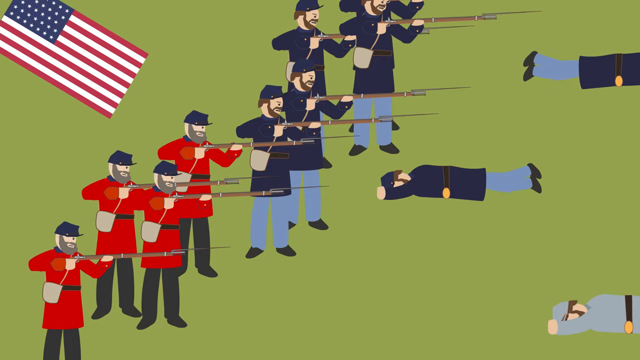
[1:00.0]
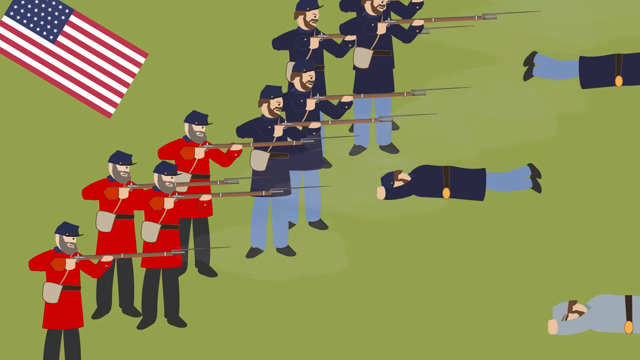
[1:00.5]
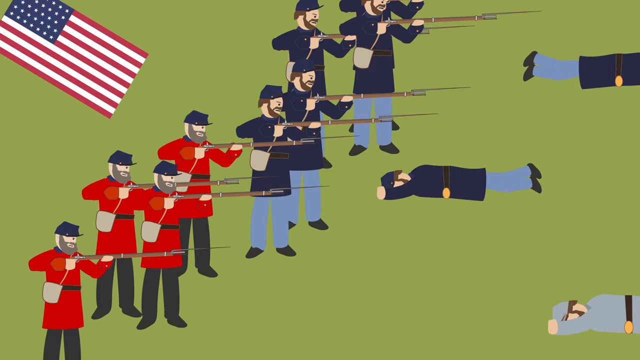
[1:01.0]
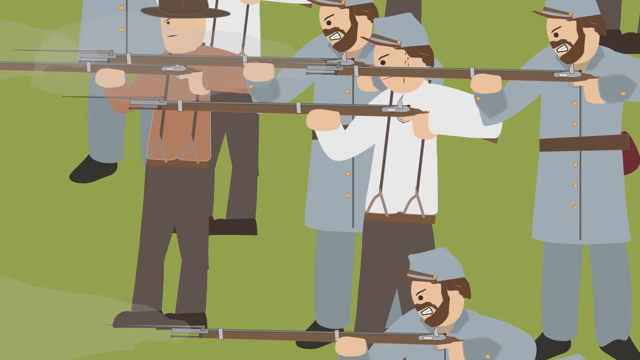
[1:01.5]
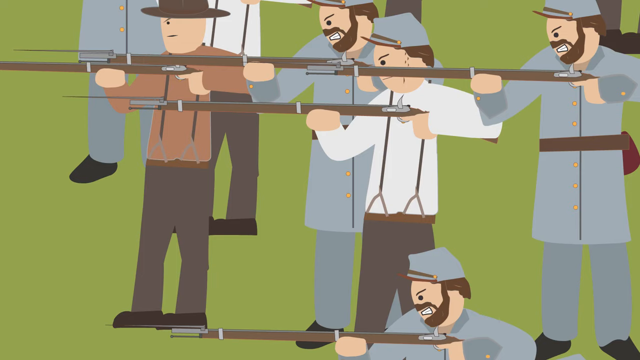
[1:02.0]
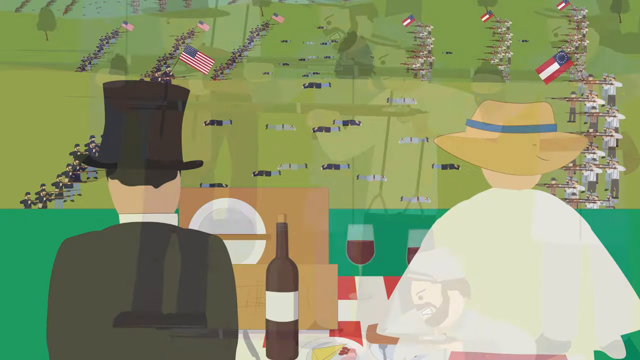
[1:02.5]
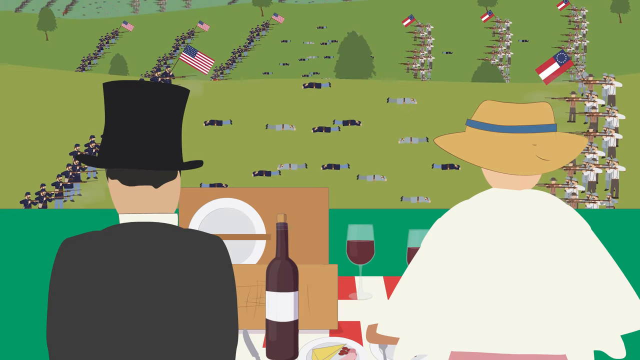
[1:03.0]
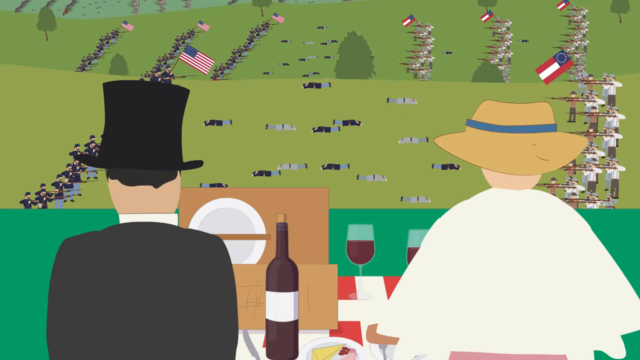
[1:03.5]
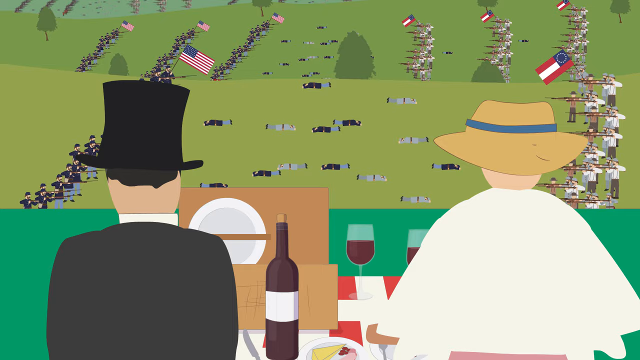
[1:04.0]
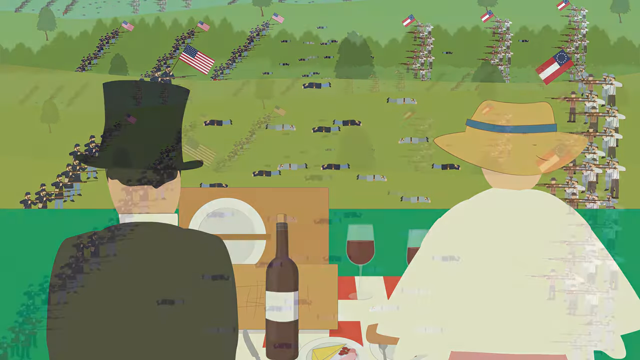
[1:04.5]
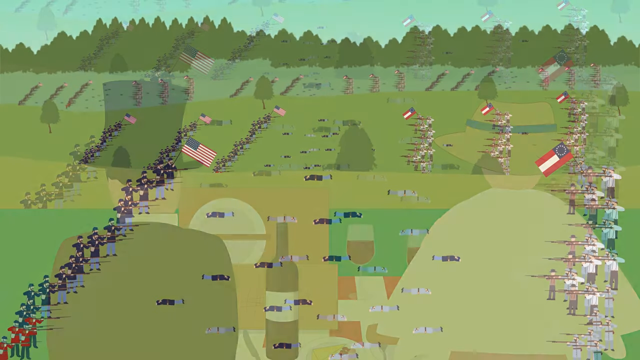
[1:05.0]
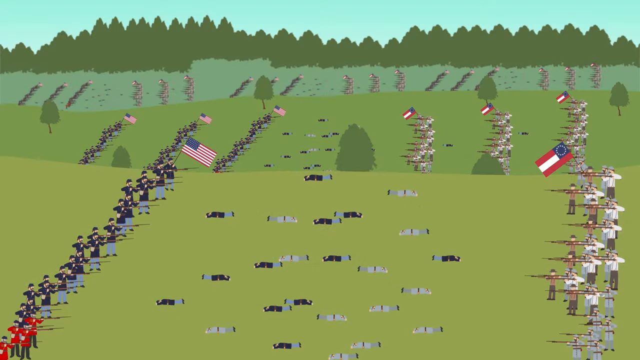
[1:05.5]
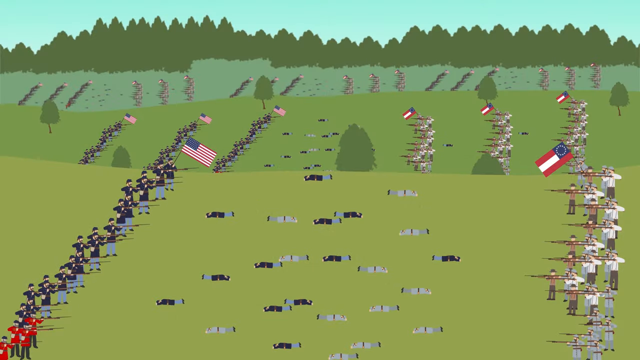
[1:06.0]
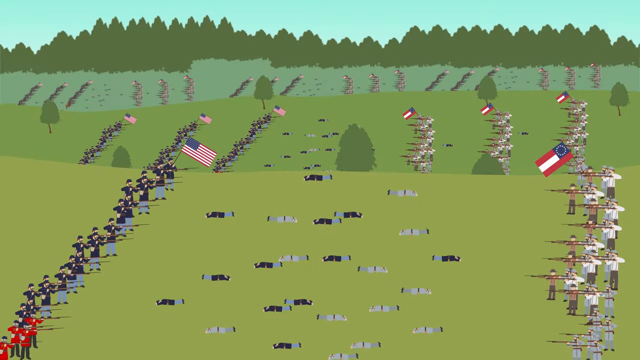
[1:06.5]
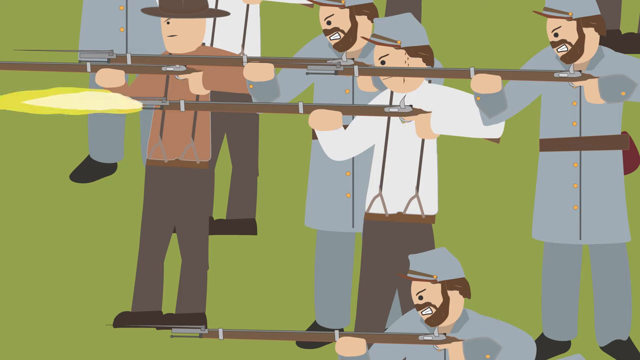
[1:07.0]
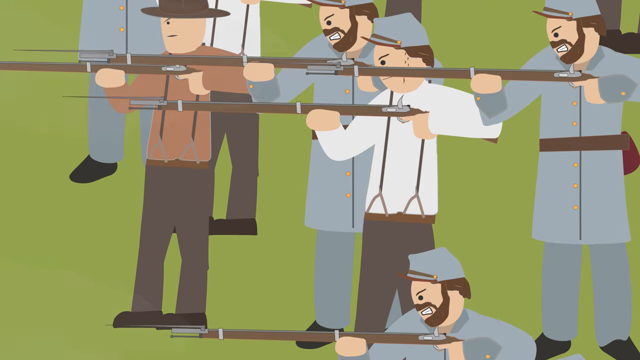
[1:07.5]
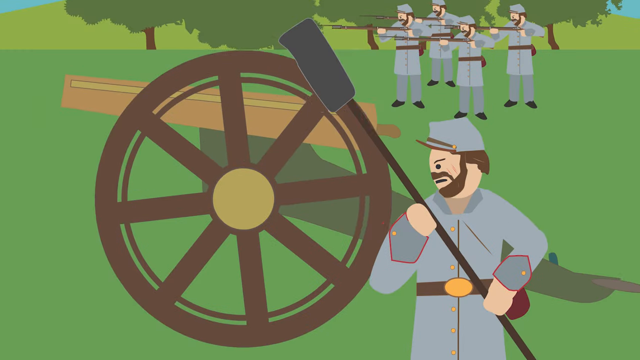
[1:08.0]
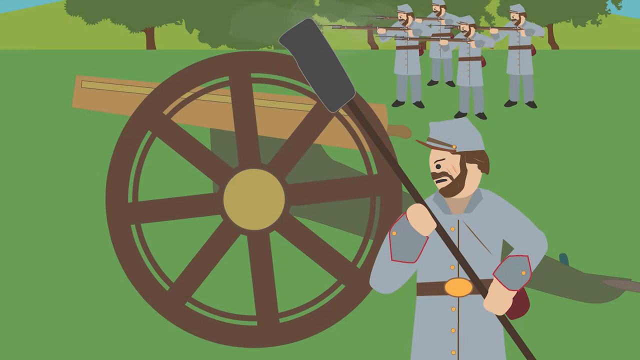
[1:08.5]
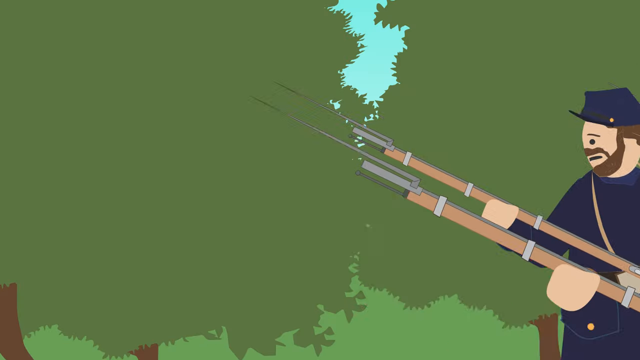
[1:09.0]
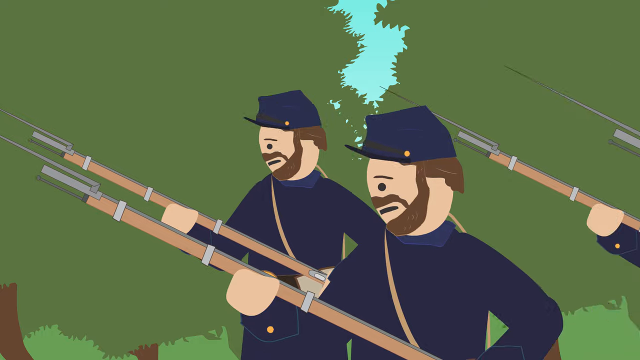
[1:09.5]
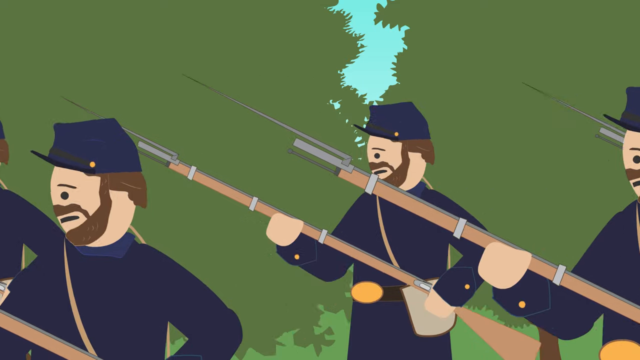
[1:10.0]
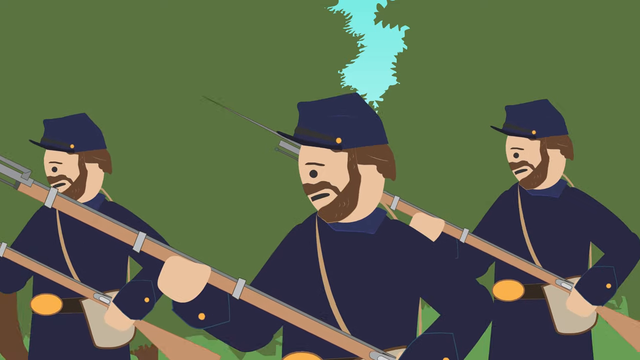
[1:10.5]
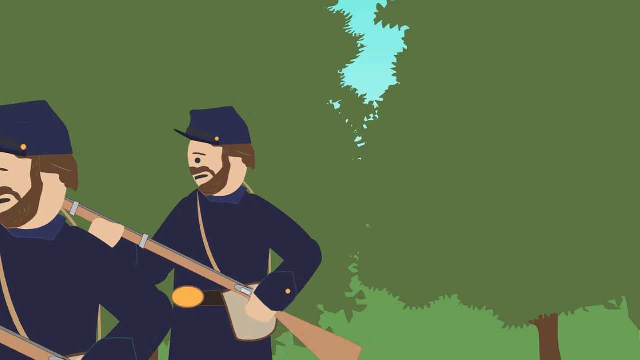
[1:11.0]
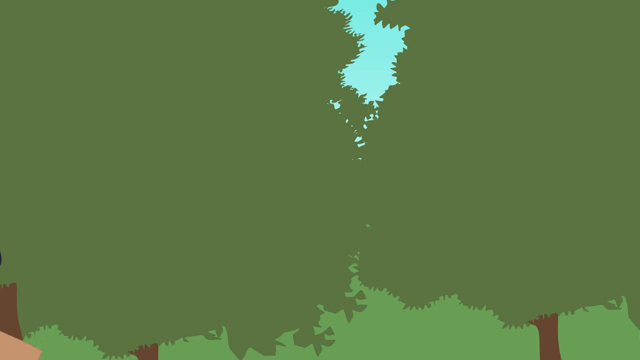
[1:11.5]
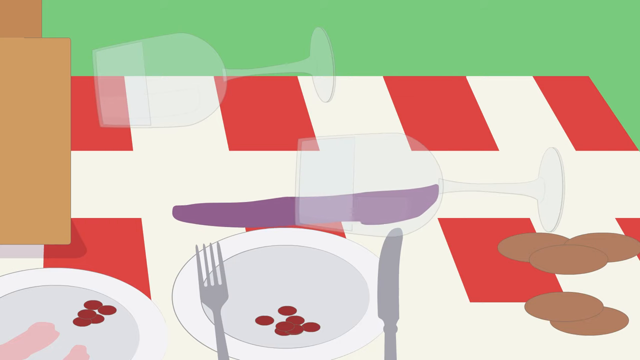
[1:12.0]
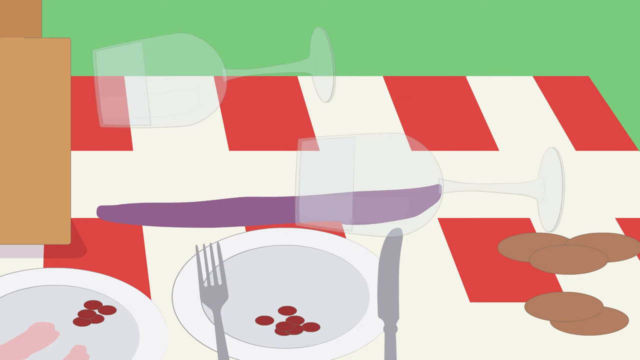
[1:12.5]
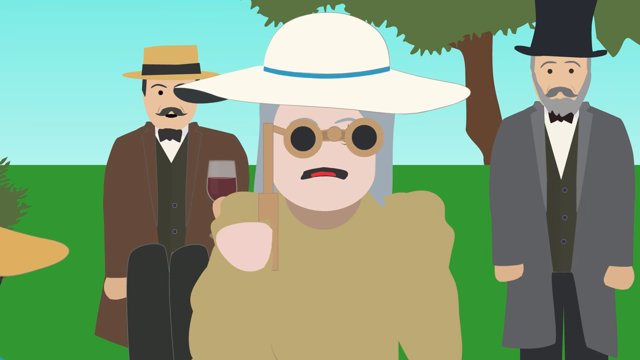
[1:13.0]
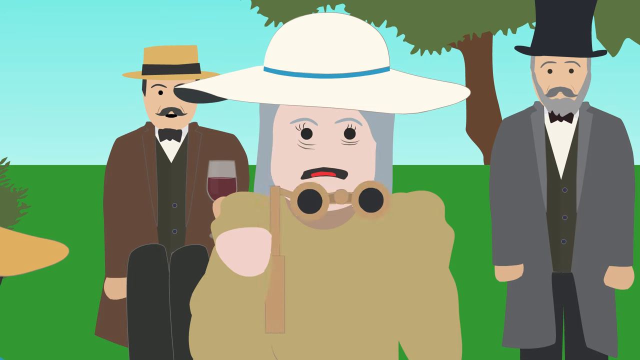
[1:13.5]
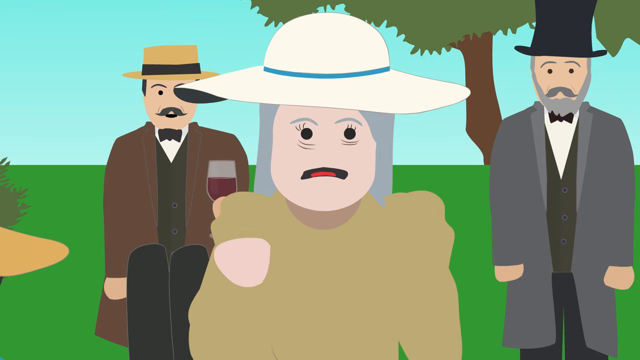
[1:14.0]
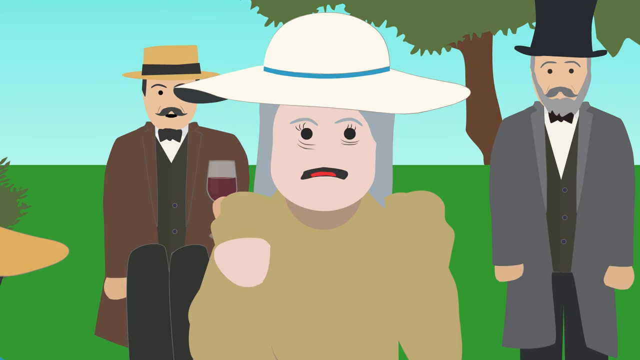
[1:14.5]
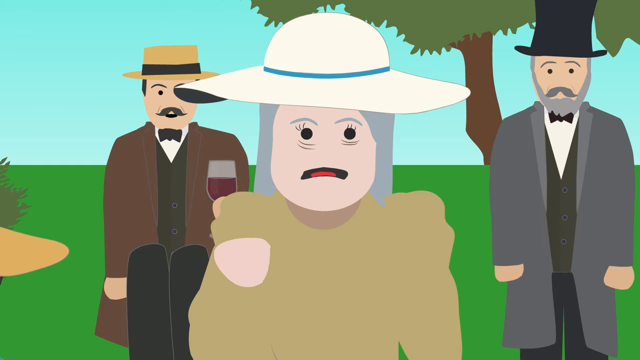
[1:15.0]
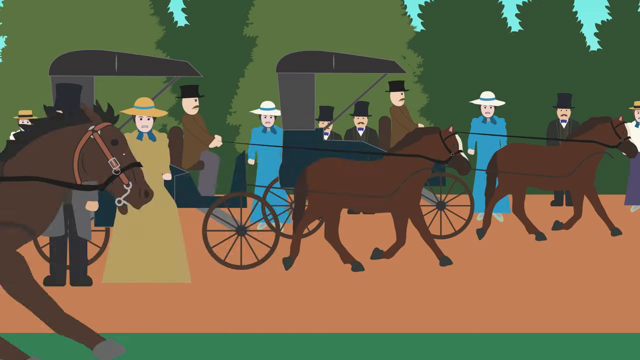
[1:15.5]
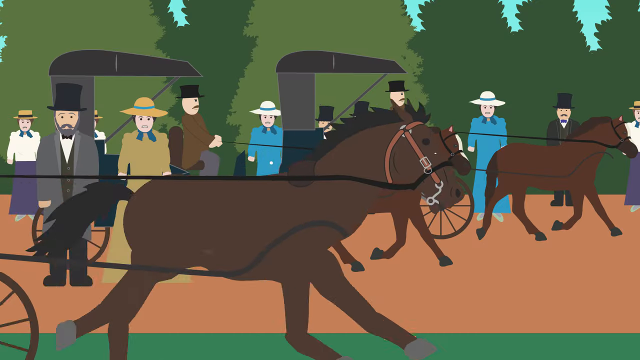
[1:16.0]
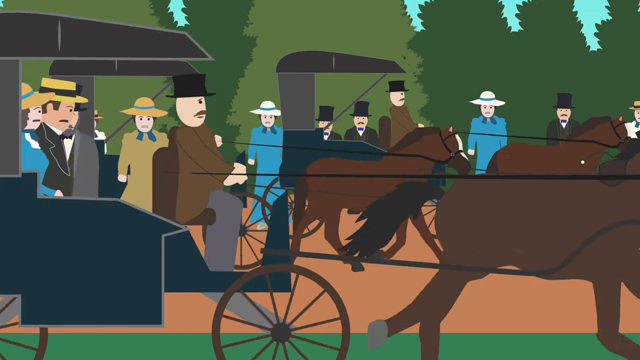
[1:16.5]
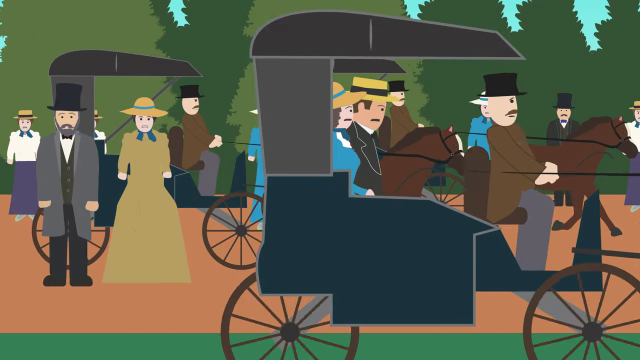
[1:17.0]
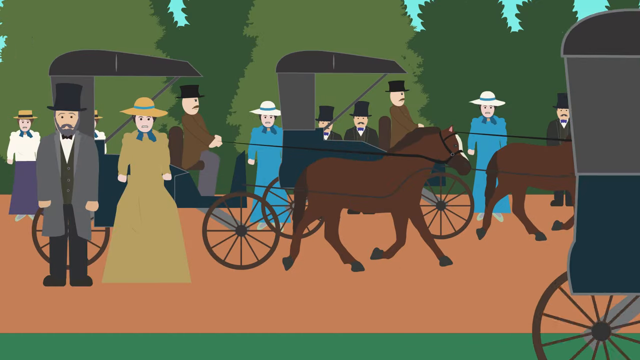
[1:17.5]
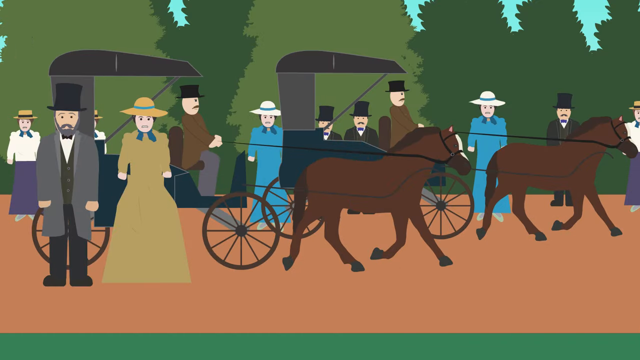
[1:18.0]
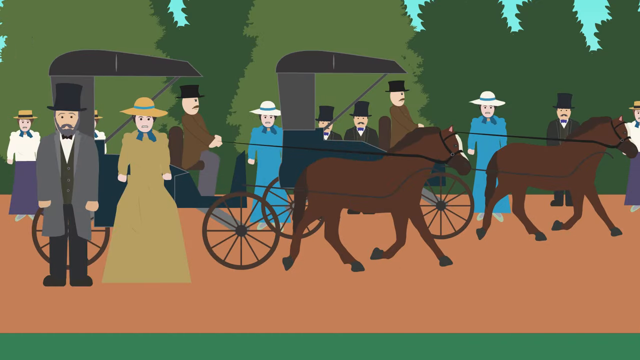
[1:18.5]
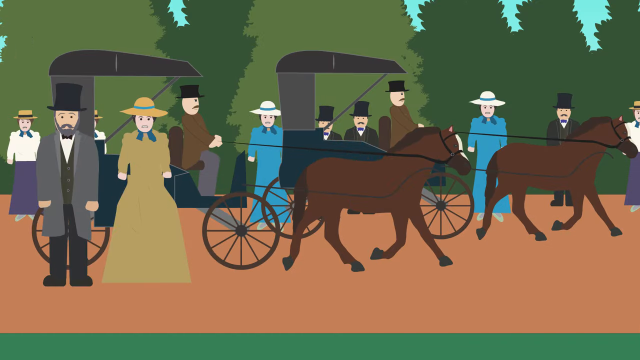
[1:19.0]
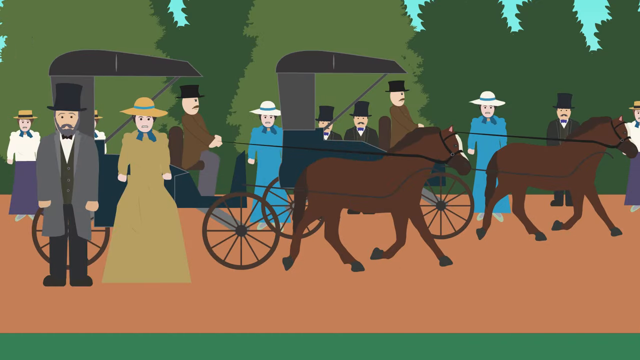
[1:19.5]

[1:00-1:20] In a cartoon depiction of the Civil War, soldiers from all sides are on the battlefield firing their weapons at each other. The townsfolk who have gathered to watch the battle are shown, and at one point they look kind of shocked. One of the women holds a pair of handheld binoculars, watching the battle as each side fires at the other and deaths occur, which apparently shocks her.